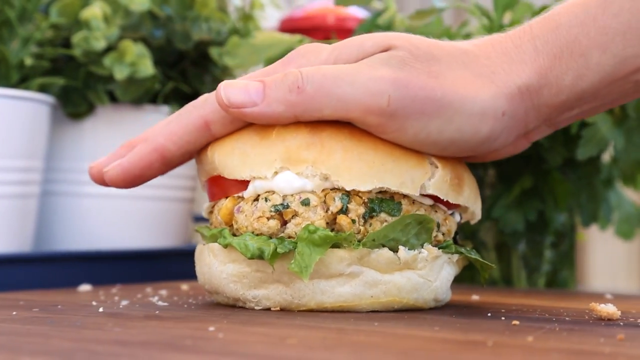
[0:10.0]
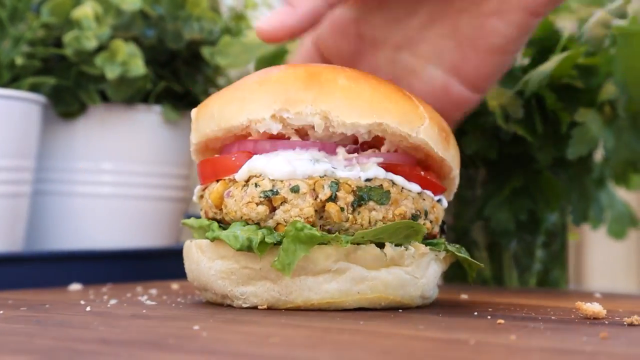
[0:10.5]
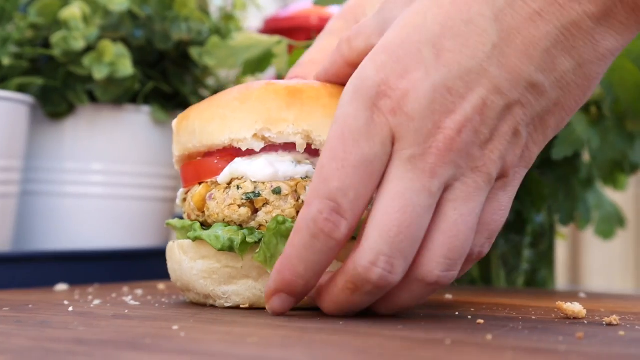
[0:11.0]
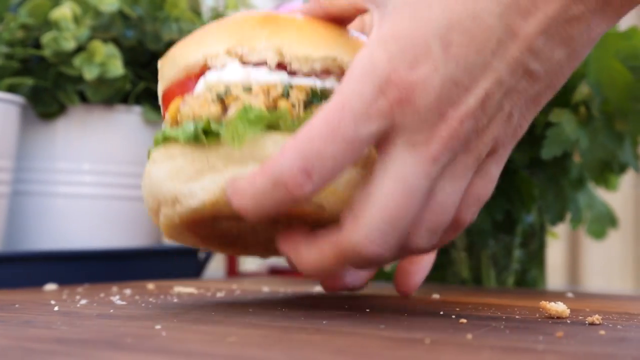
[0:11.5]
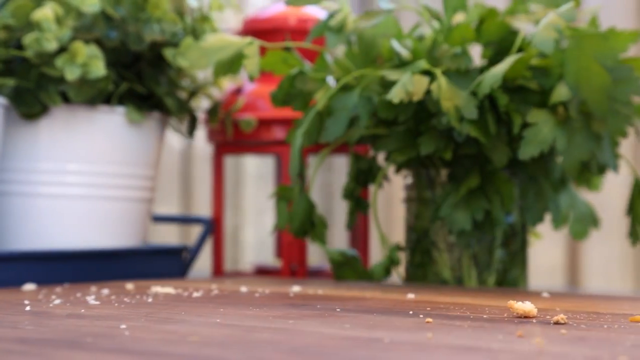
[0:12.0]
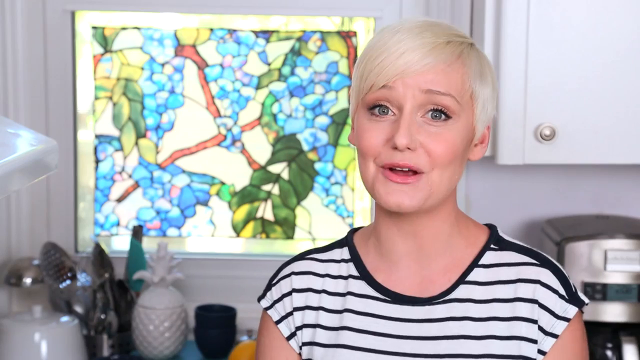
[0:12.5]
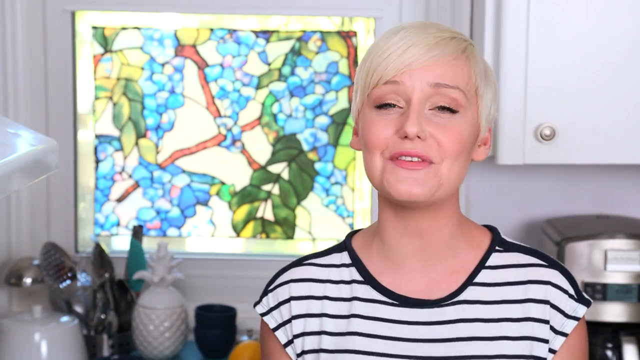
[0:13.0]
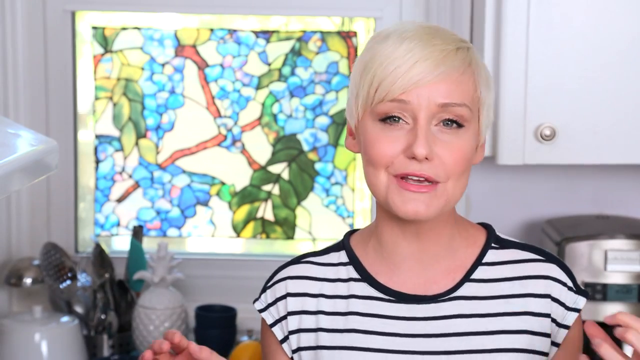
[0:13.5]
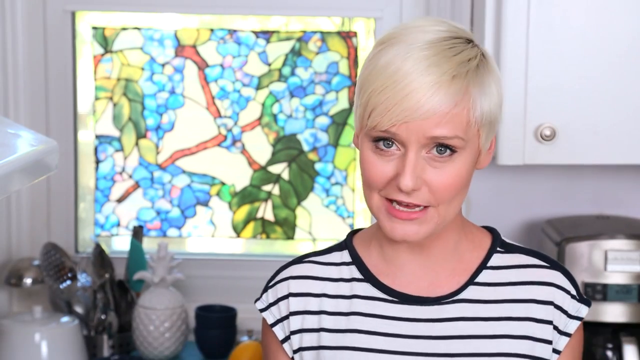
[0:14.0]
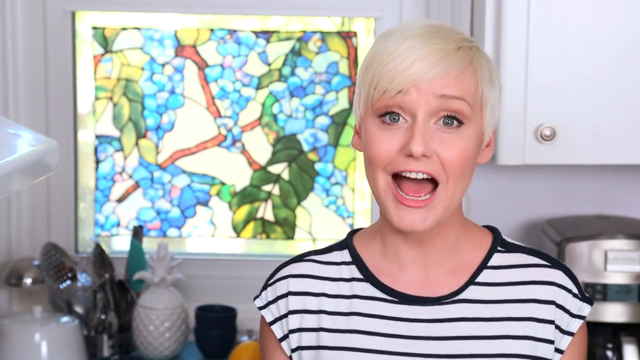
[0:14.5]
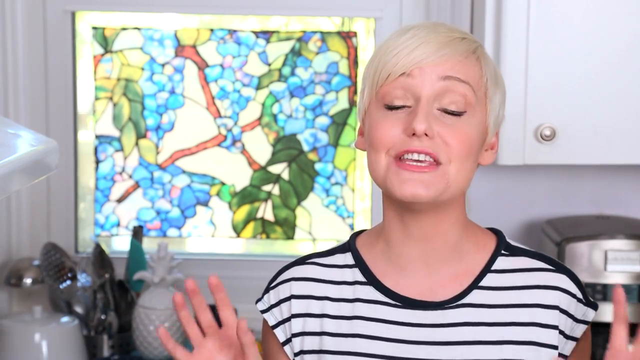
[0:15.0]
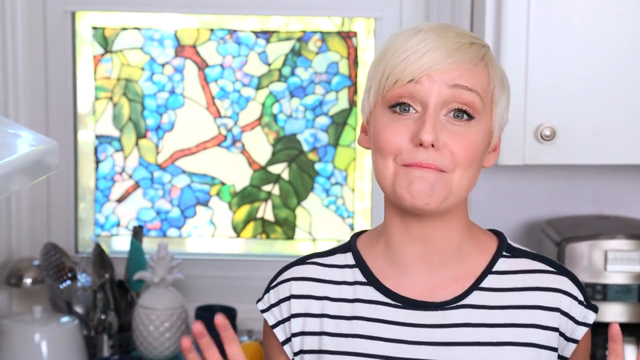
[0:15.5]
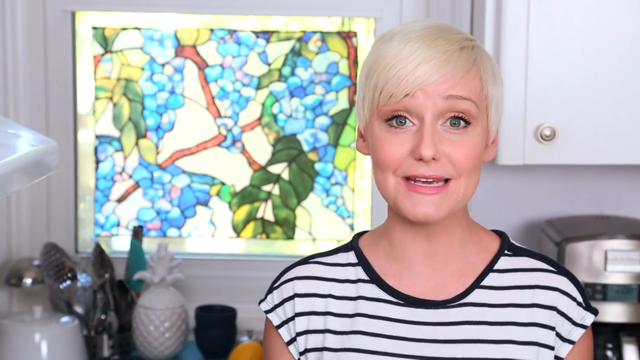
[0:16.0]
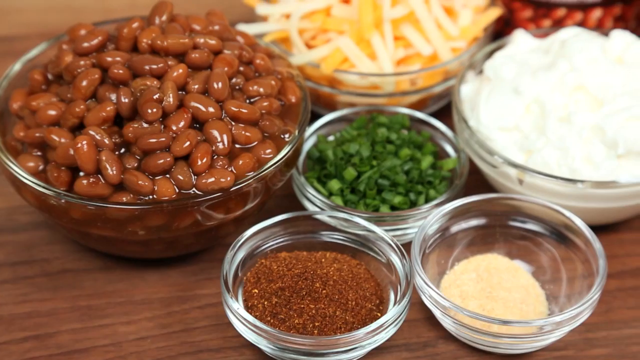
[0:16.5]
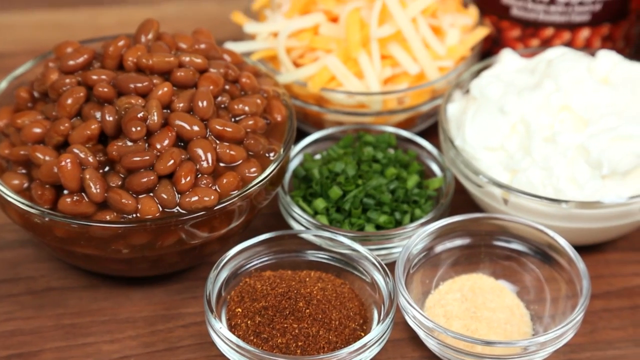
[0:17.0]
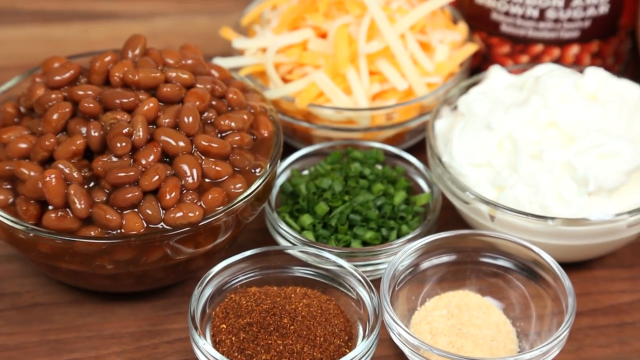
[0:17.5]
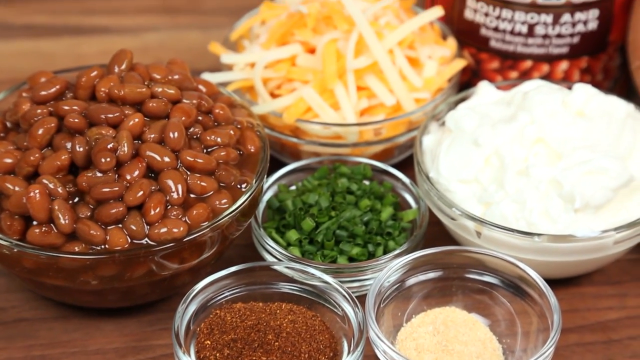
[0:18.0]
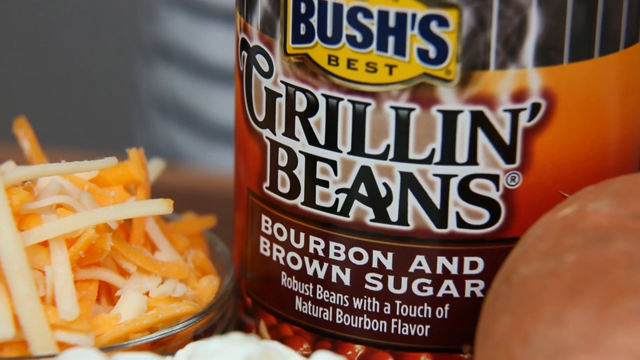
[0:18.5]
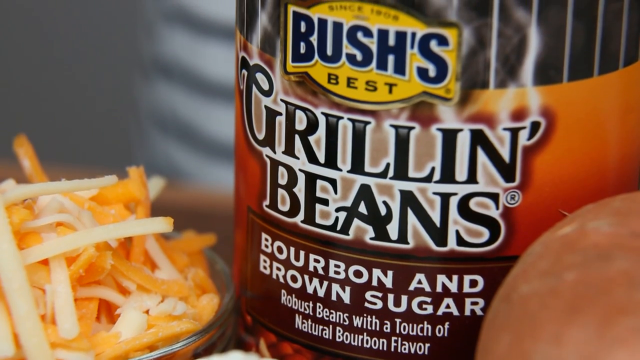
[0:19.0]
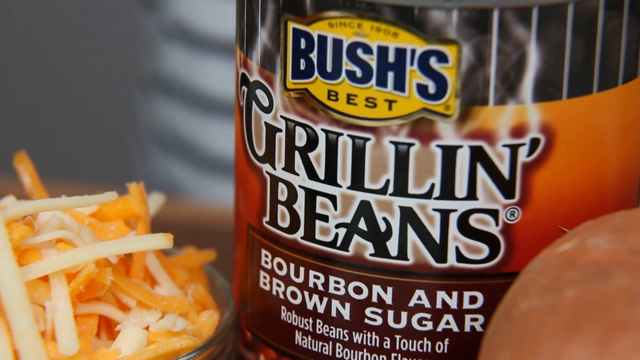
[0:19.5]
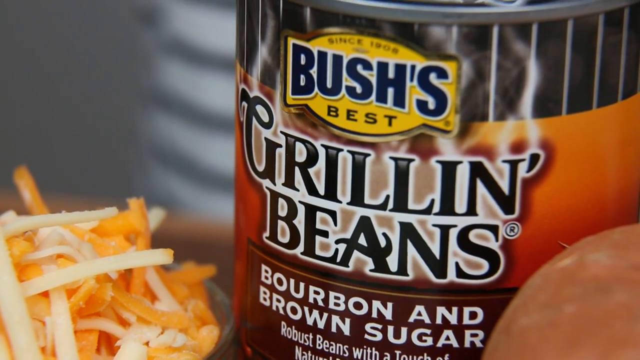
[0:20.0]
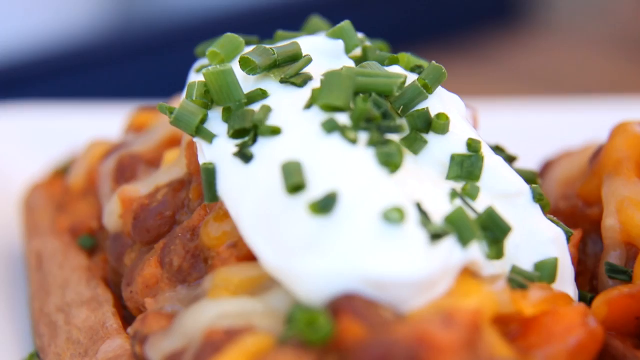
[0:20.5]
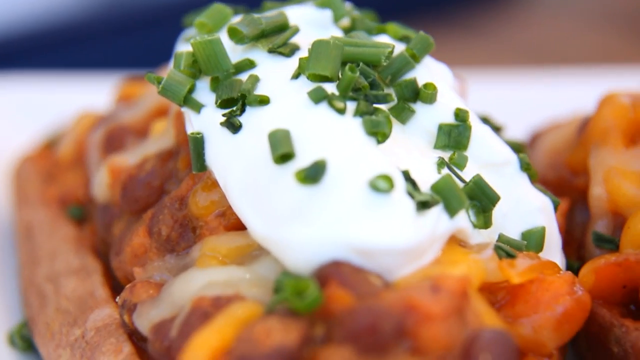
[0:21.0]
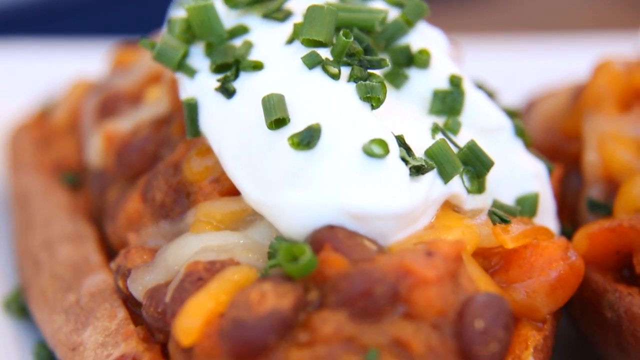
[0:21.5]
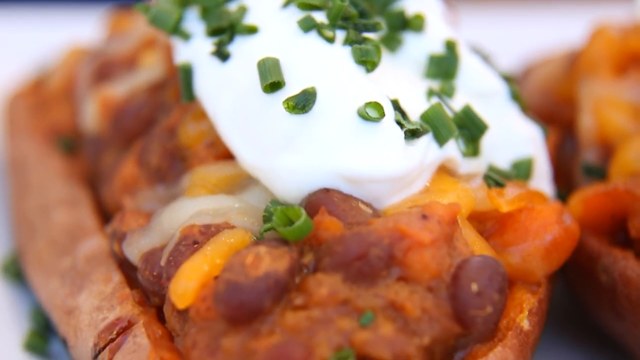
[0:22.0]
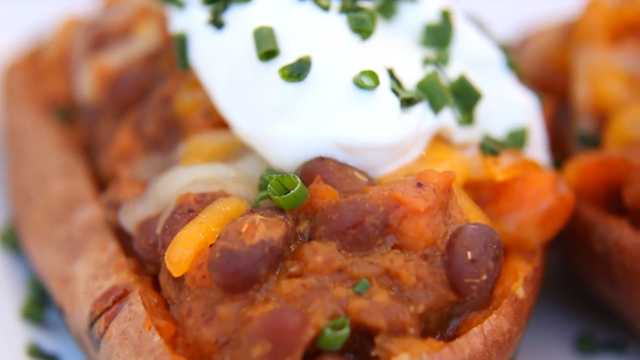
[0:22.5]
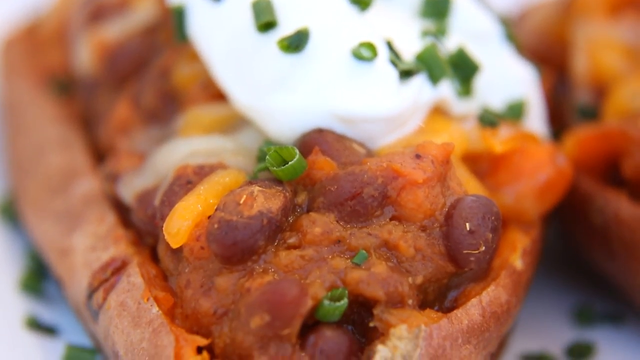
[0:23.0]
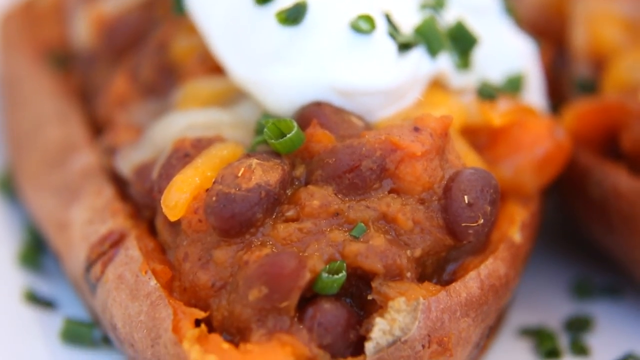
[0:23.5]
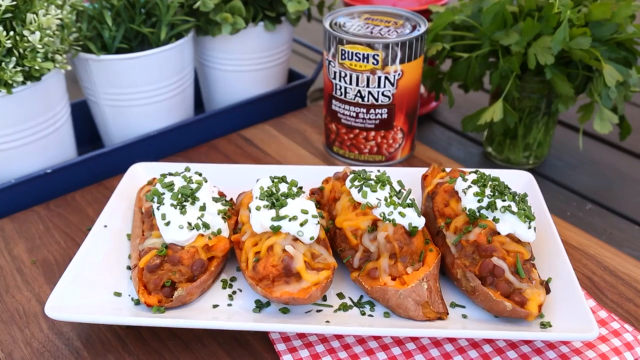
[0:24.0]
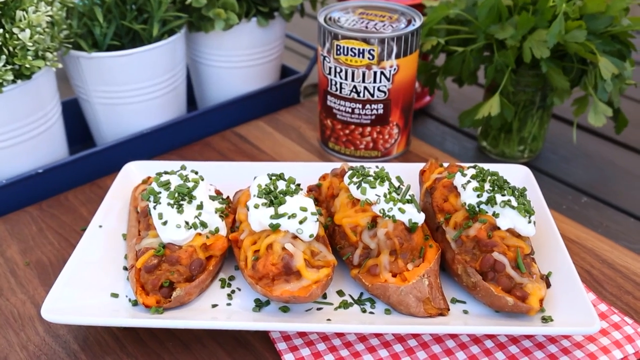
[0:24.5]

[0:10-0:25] The woman first appears to pick up the burger, which appears to have some sort of chicken with tomato and lettuce; the lettuce is below the chicken, while mayonnaise and tomato are above it, and there are two buns. The burger is on a brown table. The same Caucasian woman, still in the black and white striped shirt, picks up the burger and then appears to be talking. Then a number of bowls are shown on the brown table, maybe ingredients for a recipe. There are six bowls: one with brown beans, one with cheese, one with some sort of white cream, maybe mayonnaise or sour cream, one with a green vegetable of some sort, one with a brown spice of some sort, and one with a powder that looks like garlic powder. They are all on the table. There is also a can that says "grilling beans". Another food item is shown that appears to be some sort of bread with some sort of meat inside, maybe beans with sour cream on top. Then a wide angle shows a white plate with four food items displayed for the camera.